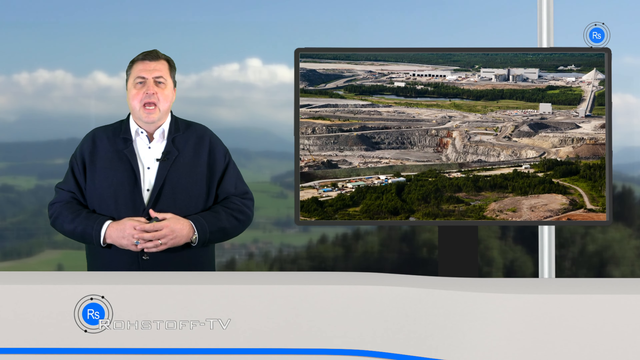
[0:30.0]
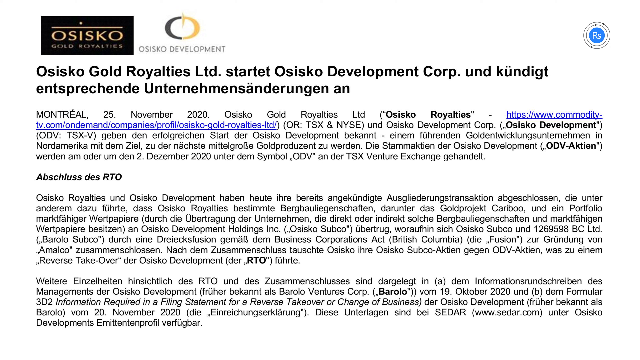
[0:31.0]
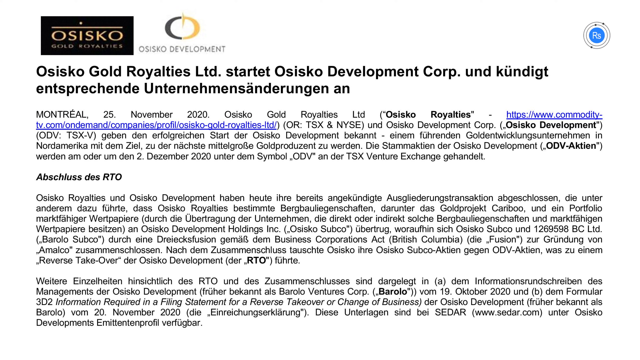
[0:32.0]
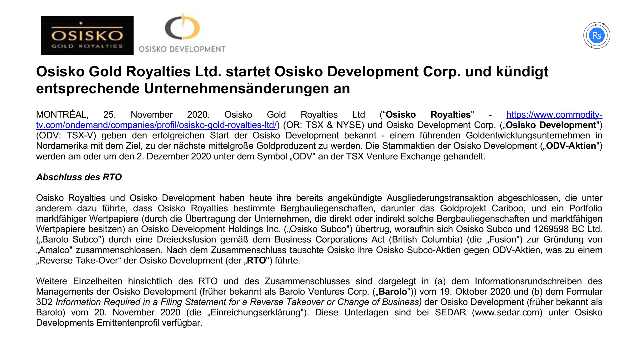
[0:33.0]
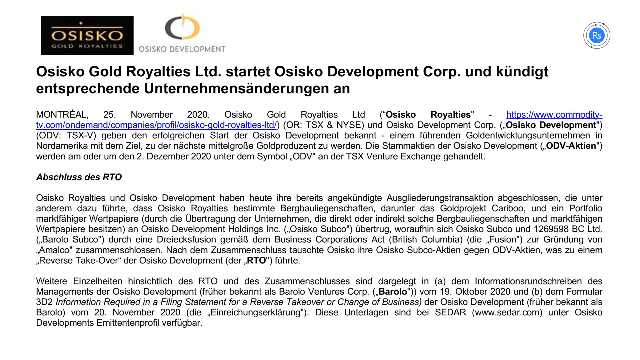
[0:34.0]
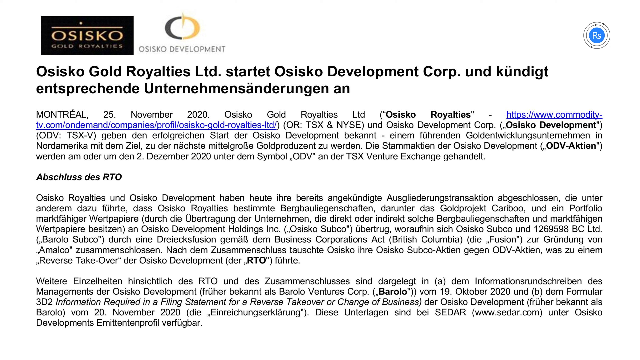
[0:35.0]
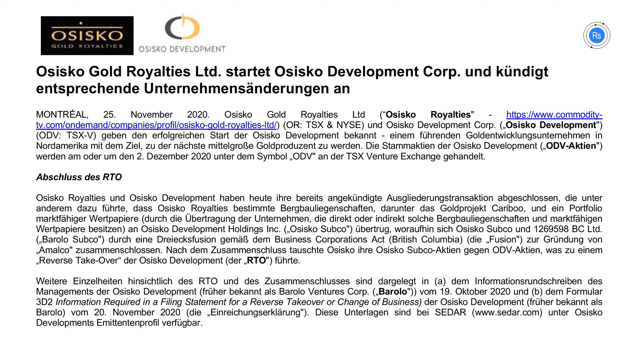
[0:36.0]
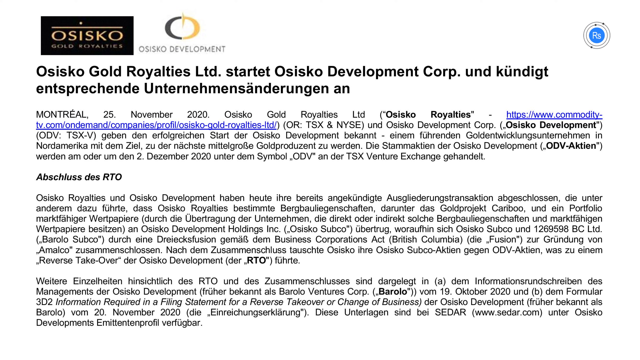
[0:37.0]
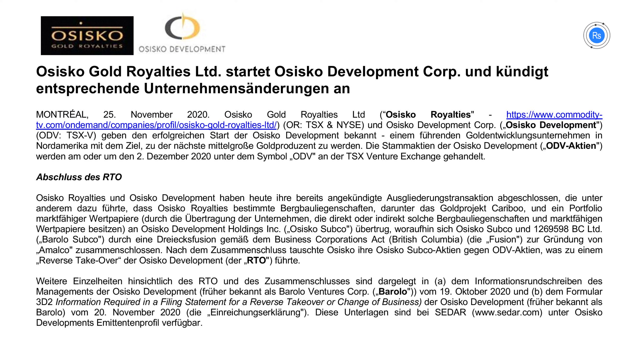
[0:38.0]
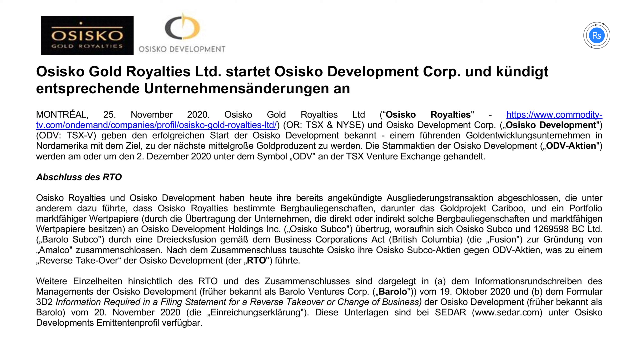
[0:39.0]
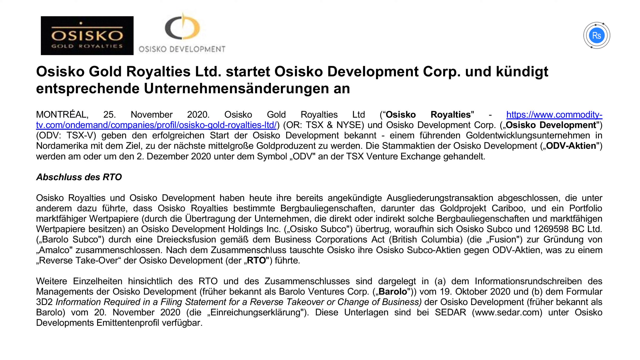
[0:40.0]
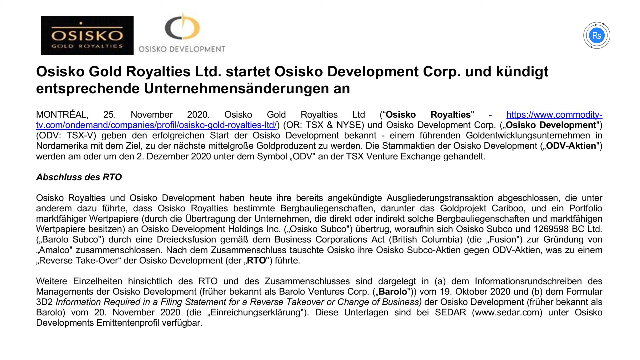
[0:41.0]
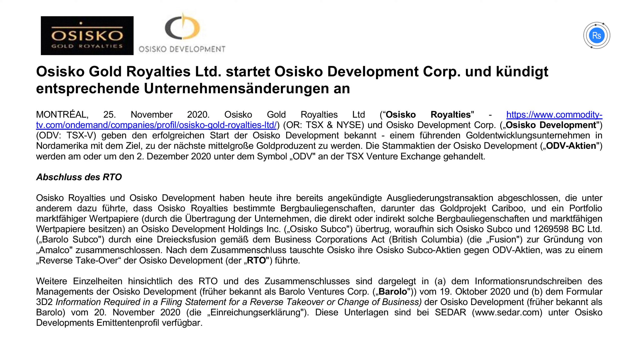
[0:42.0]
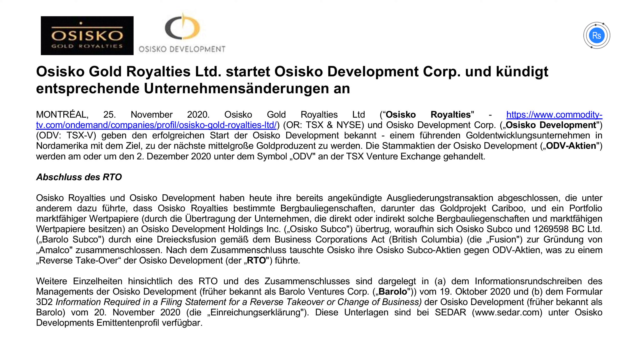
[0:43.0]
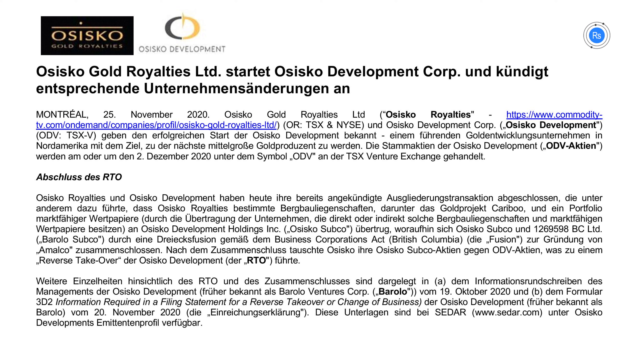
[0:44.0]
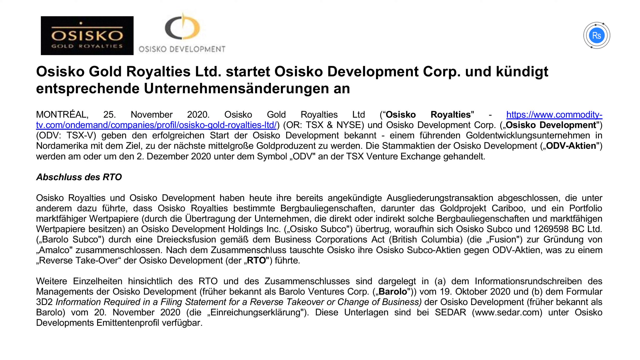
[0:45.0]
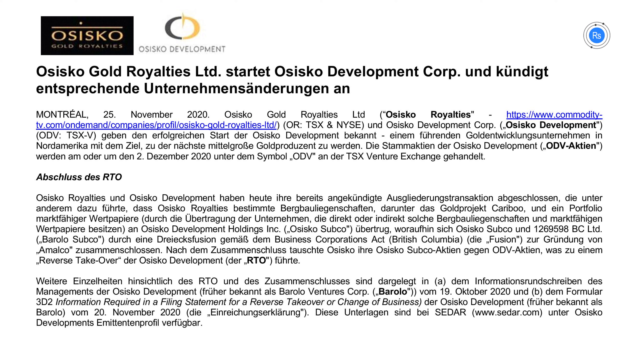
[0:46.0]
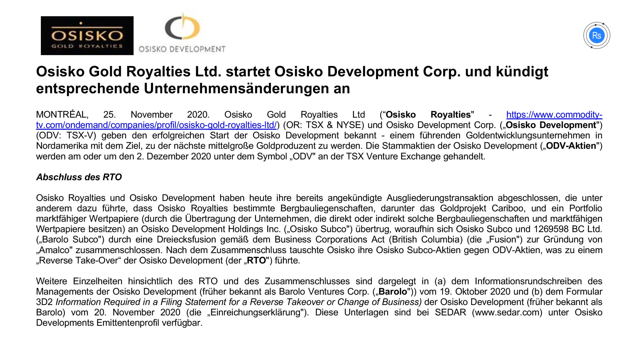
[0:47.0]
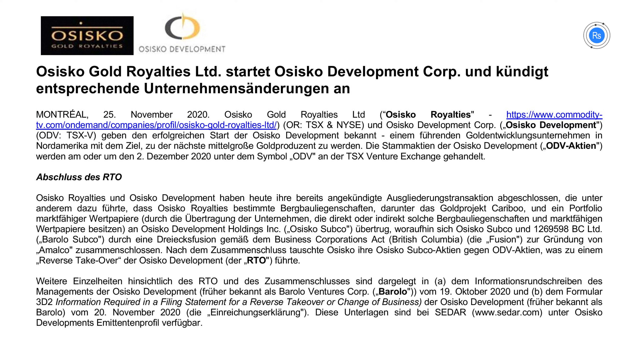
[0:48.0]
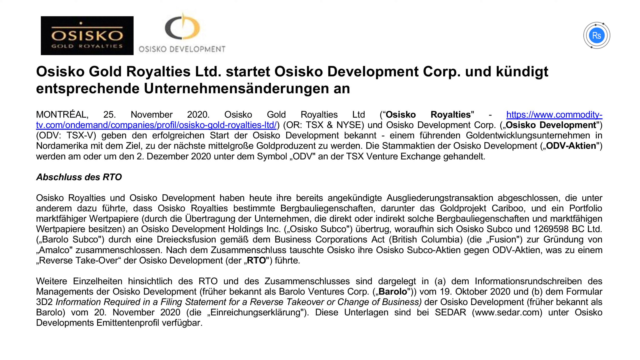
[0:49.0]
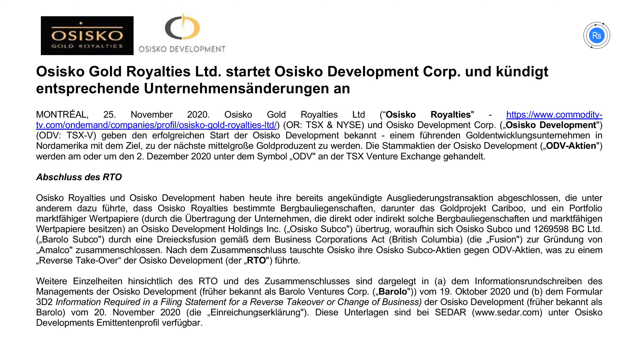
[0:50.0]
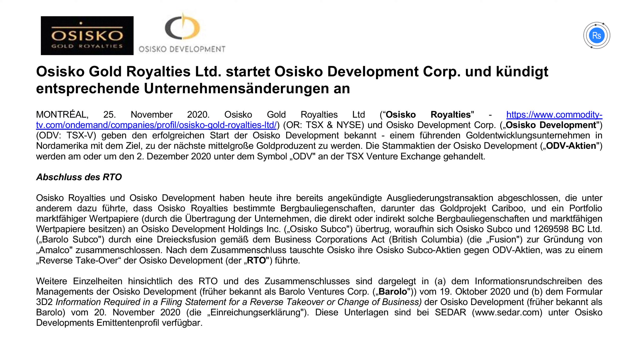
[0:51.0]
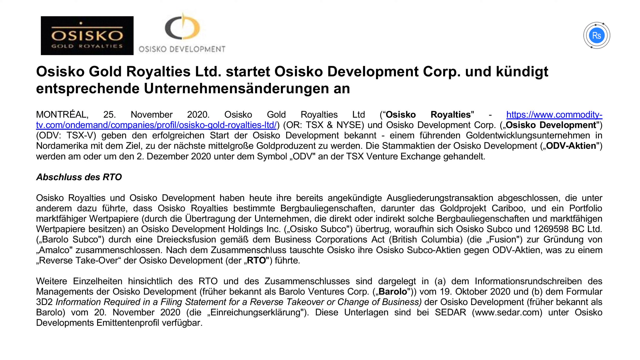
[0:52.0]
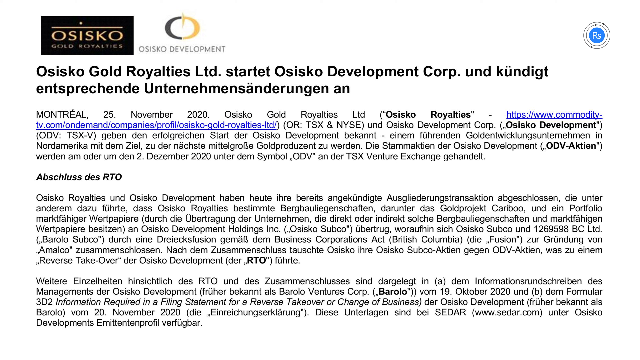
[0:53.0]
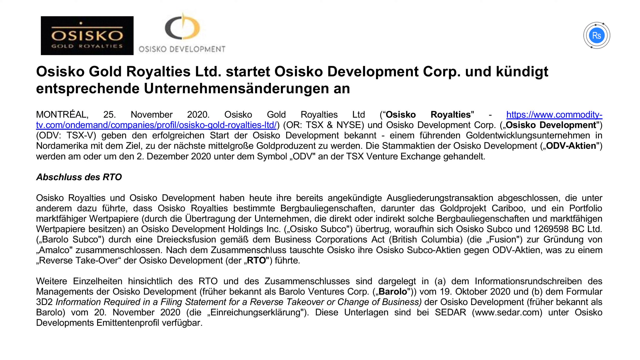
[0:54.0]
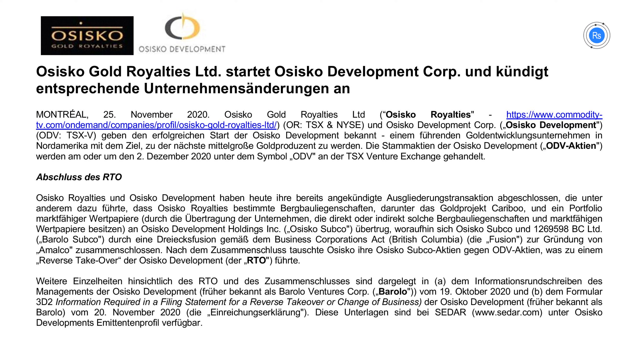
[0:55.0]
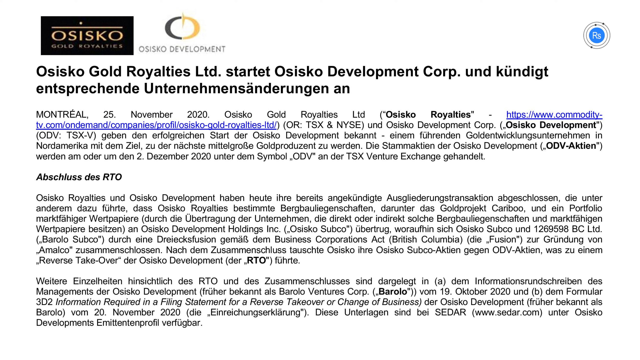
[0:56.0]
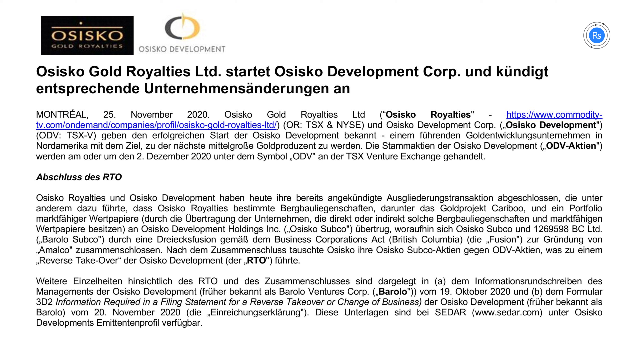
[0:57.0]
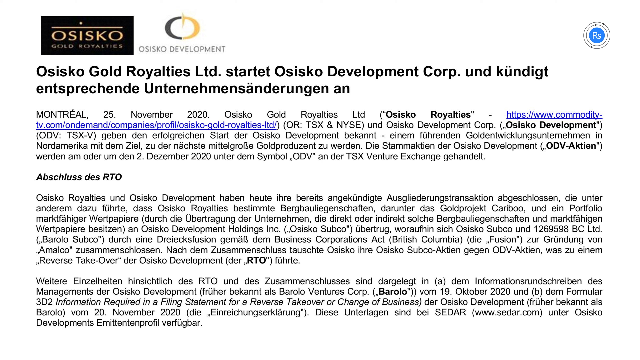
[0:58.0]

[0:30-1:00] Documents about Osisko Gold Royalties Limited are shown, mentioning Osisko Development Corp and the date 25 November 2020, apparently the date the company was established. Most of the text is not in English, in an unidentified language.